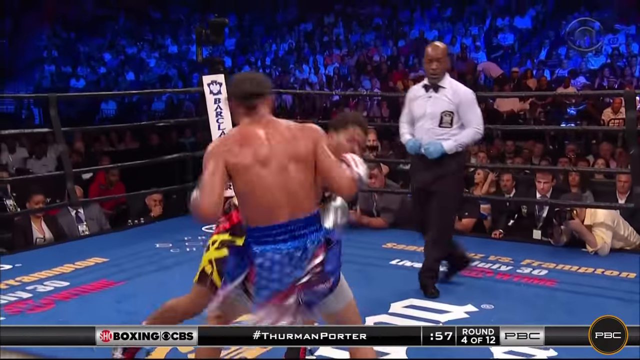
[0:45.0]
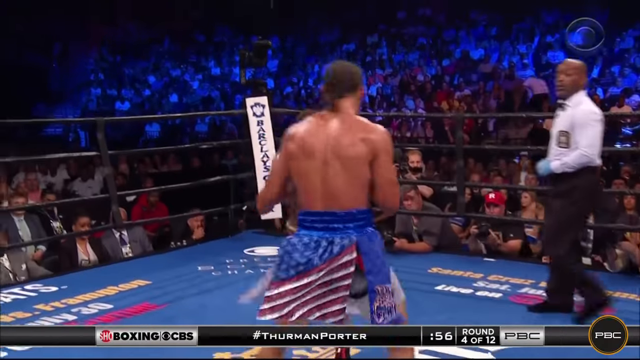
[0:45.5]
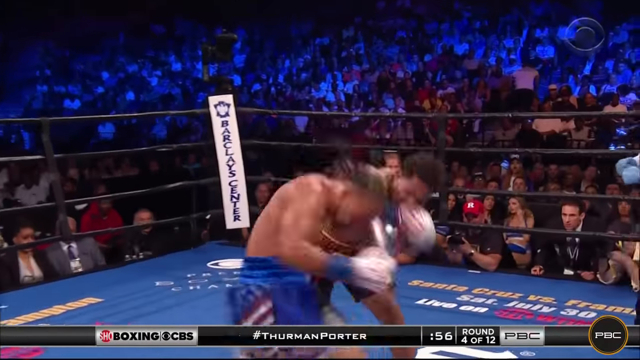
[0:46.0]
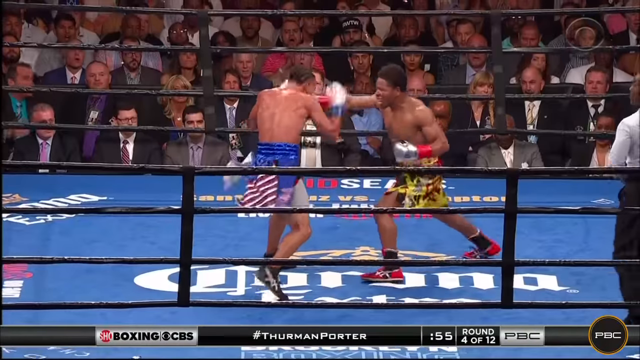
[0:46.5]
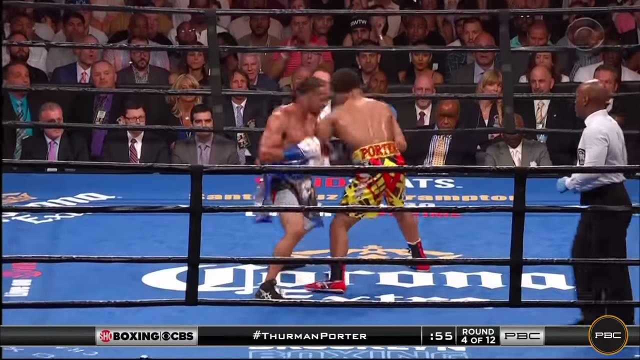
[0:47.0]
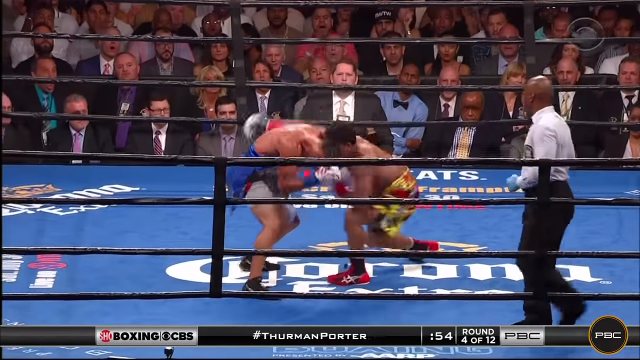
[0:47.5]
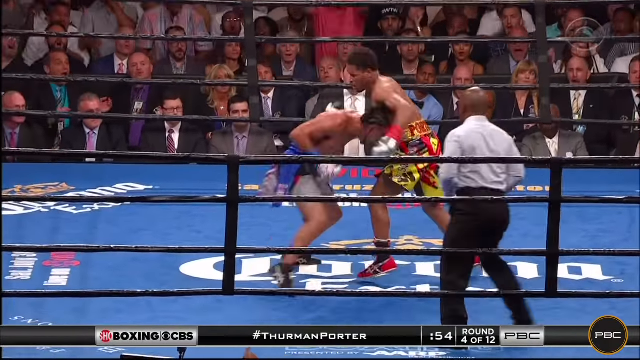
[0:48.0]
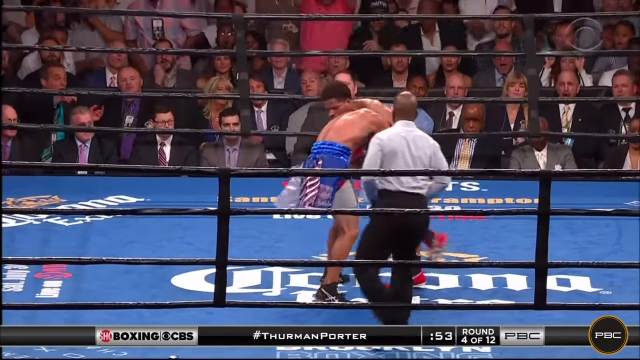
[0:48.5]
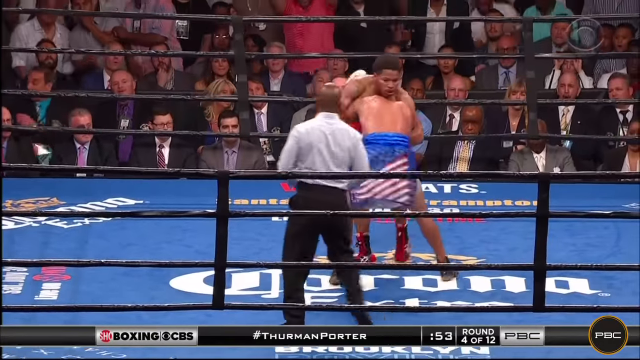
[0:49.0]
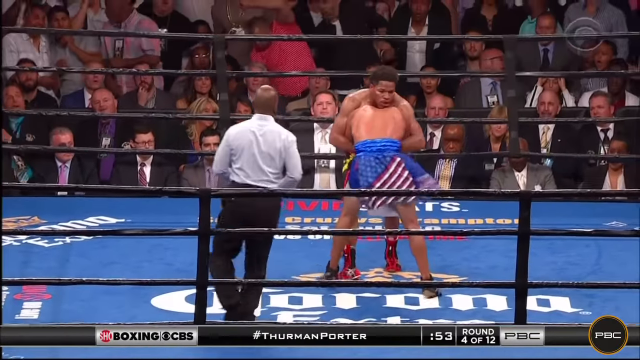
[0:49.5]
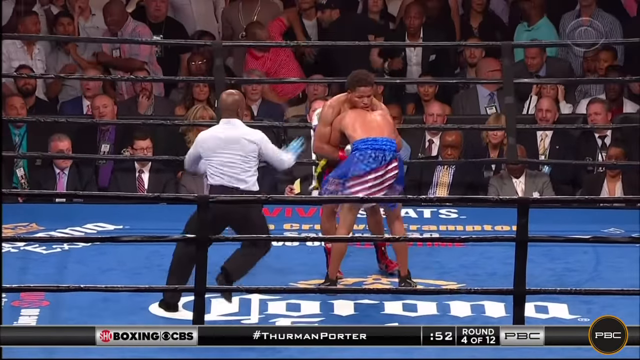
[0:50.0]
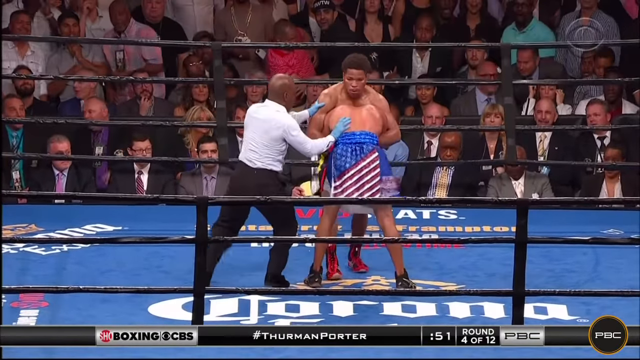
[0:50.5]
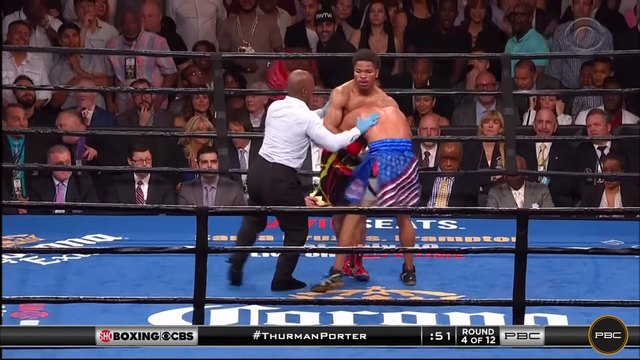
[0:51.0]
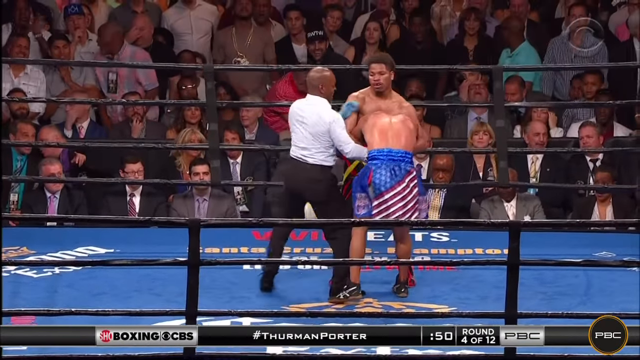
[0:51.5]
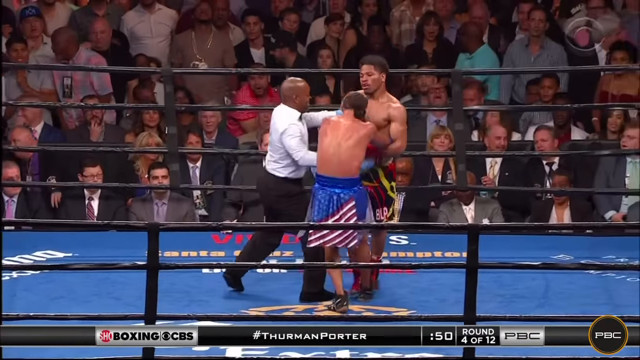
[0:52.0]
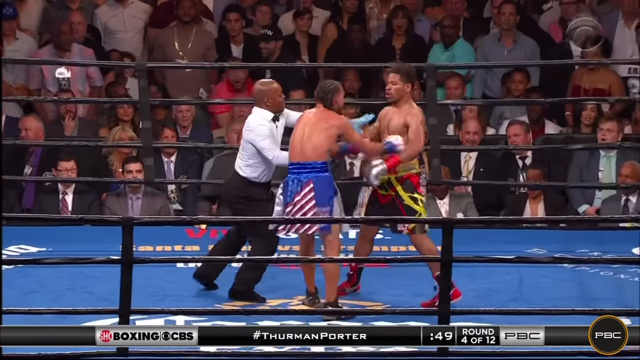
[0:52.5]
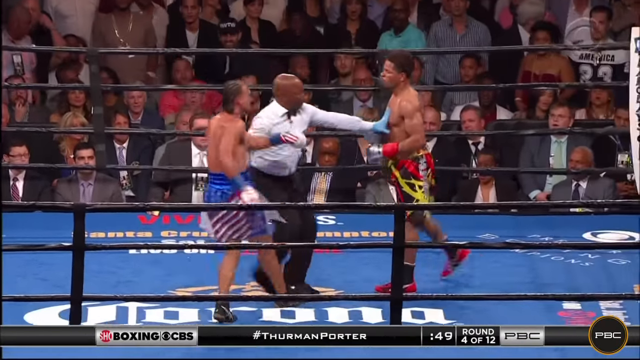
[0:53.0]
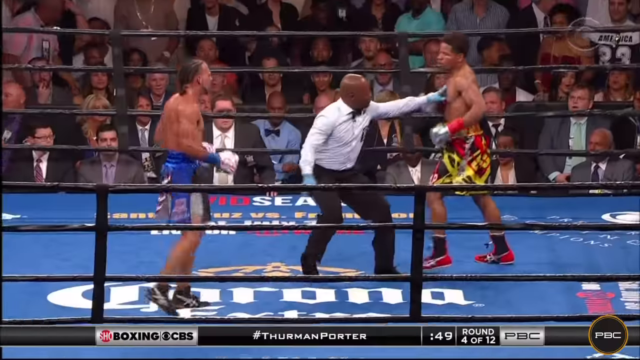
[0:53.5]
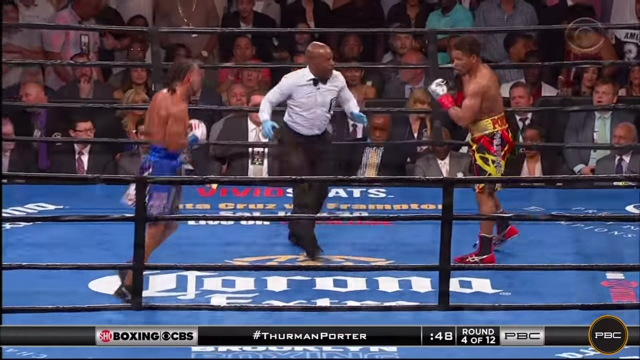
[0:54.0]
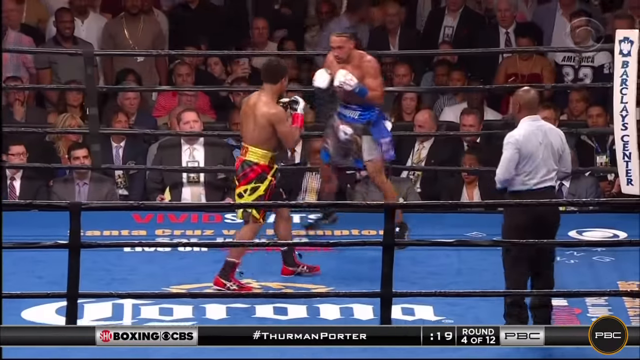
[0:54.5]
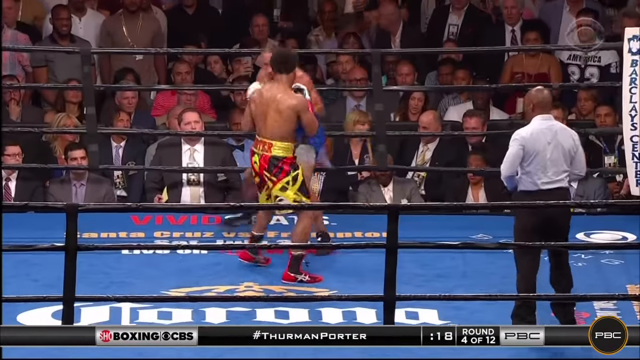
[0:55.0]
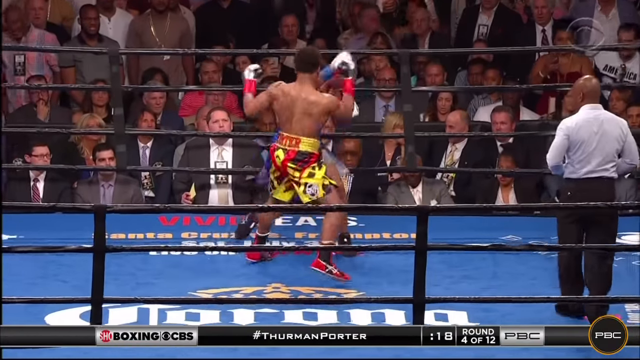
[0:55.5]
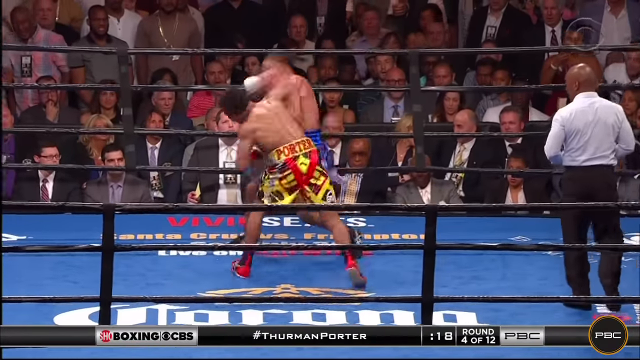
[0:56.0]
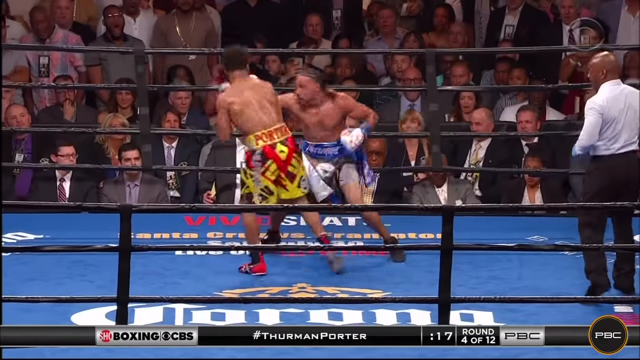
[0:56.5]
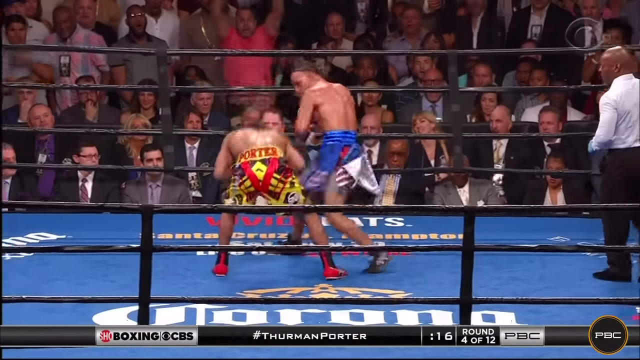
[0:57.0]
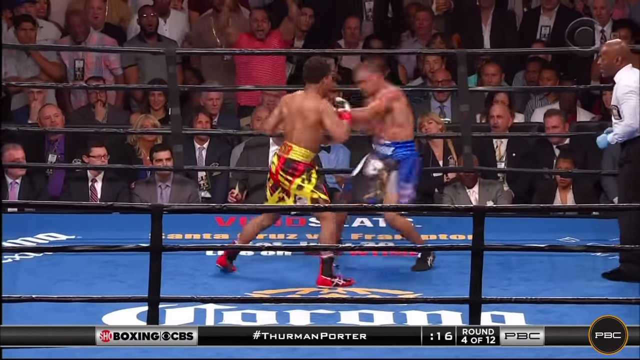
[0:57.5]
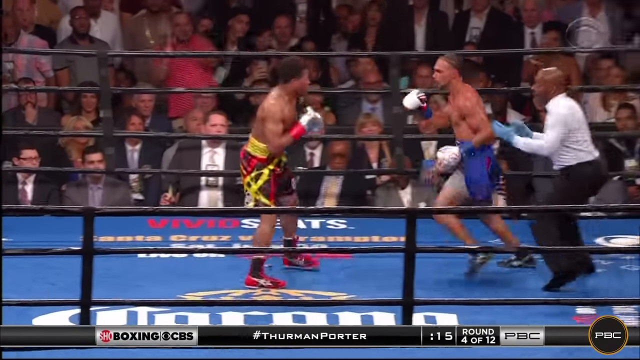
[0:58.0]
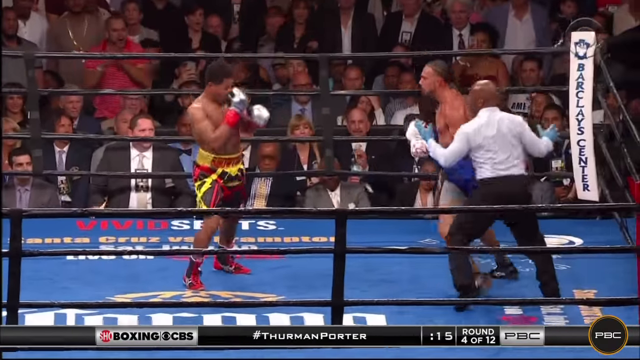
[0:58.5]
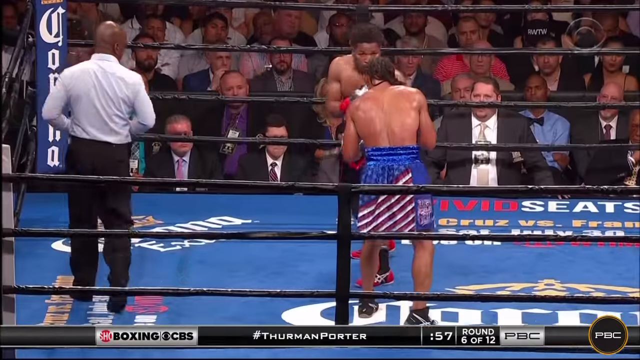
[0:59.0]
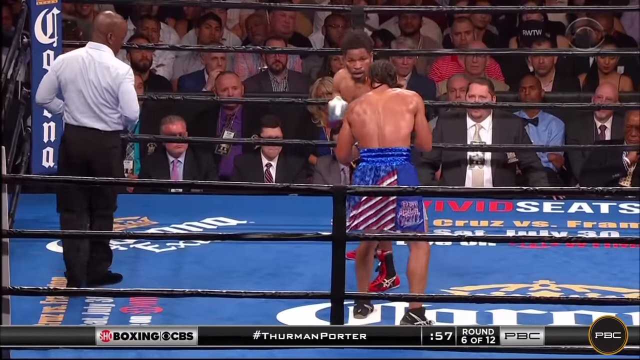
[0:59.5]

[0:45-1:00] In the middle of the ring the two boxers throw large, looping haymakers, crosses, and hooks at one another until they get tangled up: the boxer in blue shorts has his head in the torso of the boxer in yellow and black shorts, who wraps his arms around the blue-shorted boxer's shoulders. The referee steps in, pulls them apart, and pushes them away from one another to restart the fighting. After a jump cut they are again in the middle of the ring throwing large punches, but they do not appear to be landing. The referee has a bald, shiny head and a long-sleeved white shirt, and he paces around the boxers as they fight. The boxer in blue shorts appears to have white and red stripes on the back of his shorts, like an American flag style design. The boxer in yellow, black, and red shorts wears bright red shoes with white and black accents. Beneath them in the middle of the bright blue ring floor is what appears to be a white Corona Extra beer logo for sponsorship.